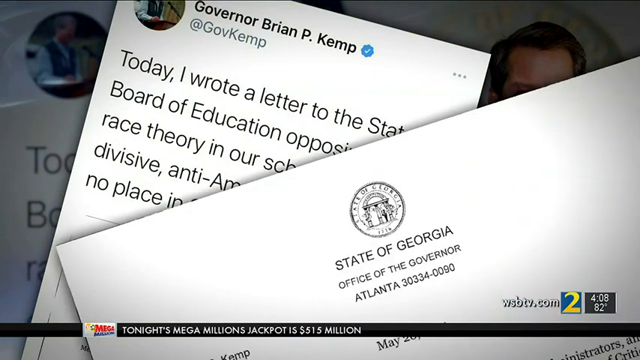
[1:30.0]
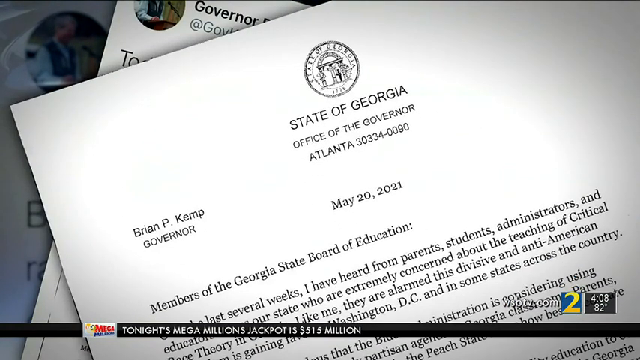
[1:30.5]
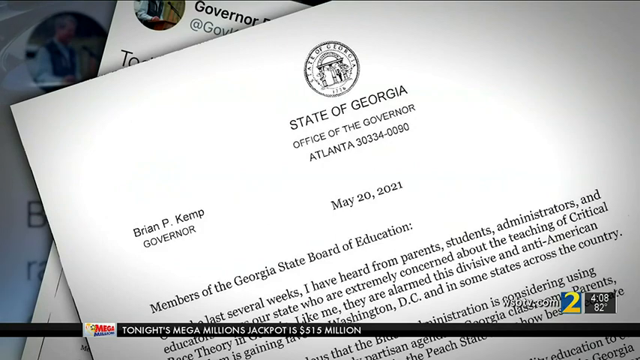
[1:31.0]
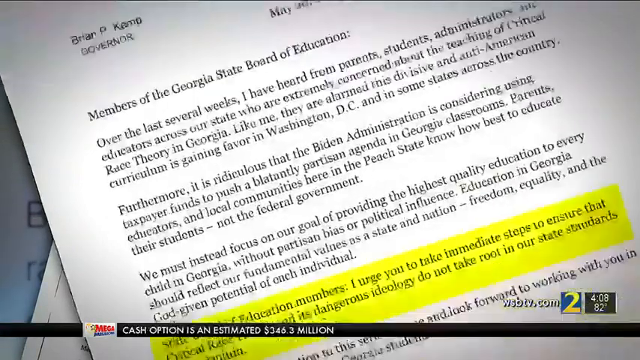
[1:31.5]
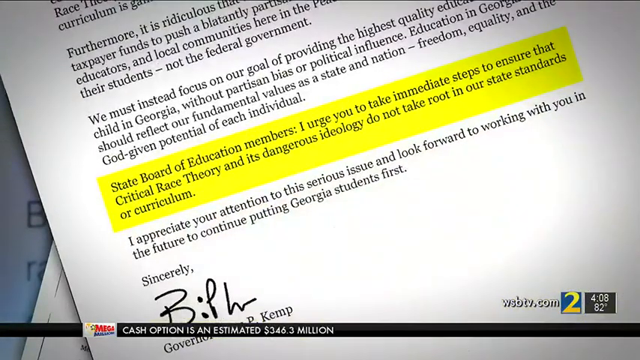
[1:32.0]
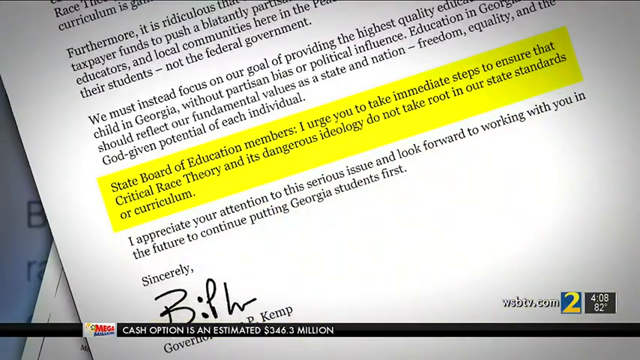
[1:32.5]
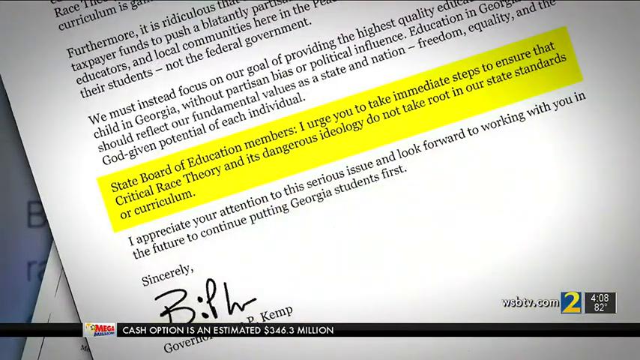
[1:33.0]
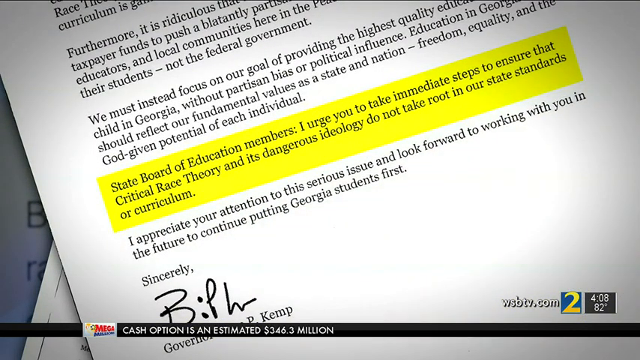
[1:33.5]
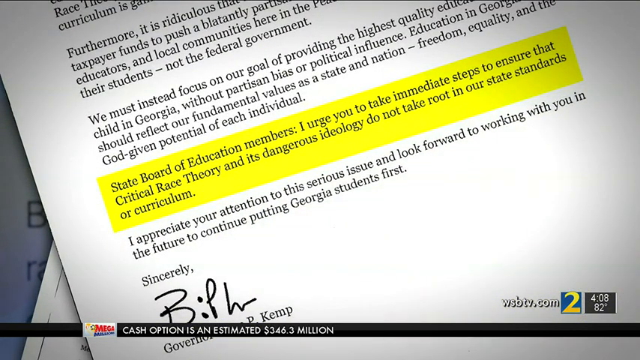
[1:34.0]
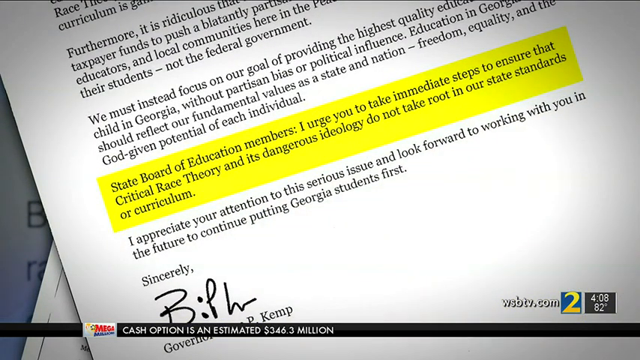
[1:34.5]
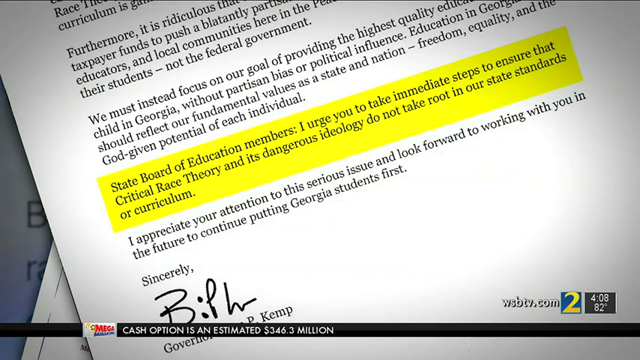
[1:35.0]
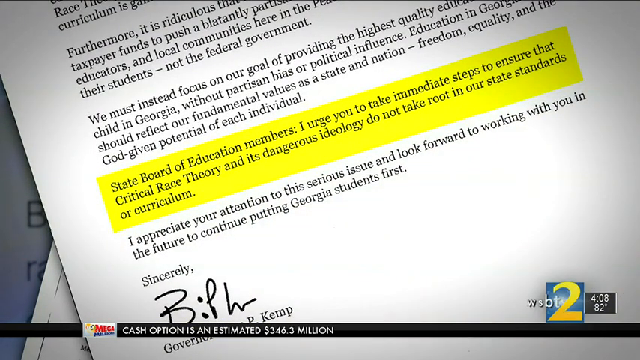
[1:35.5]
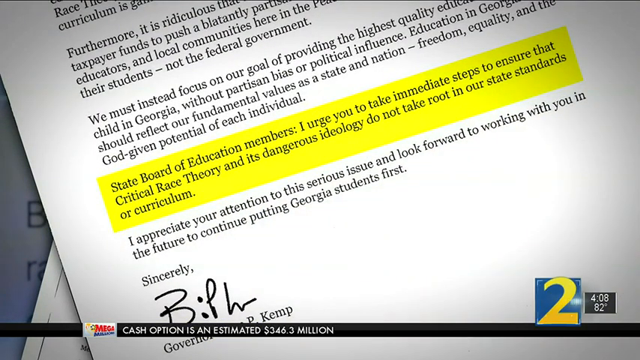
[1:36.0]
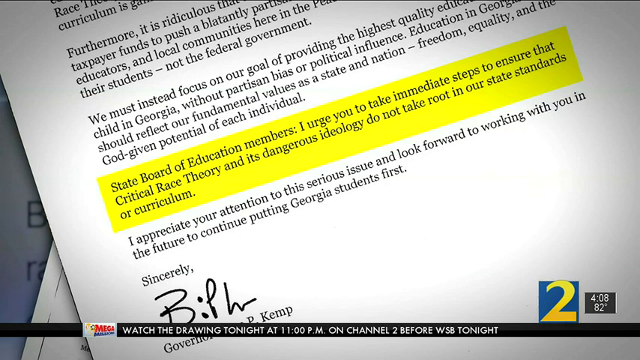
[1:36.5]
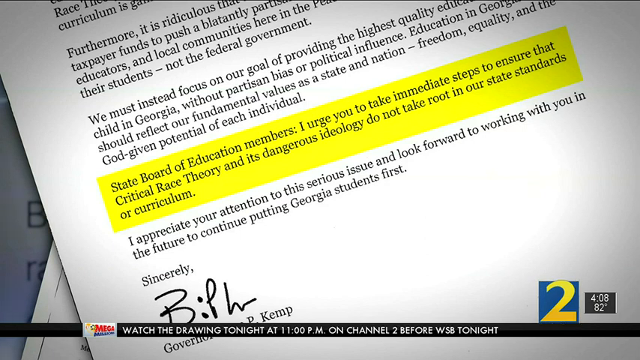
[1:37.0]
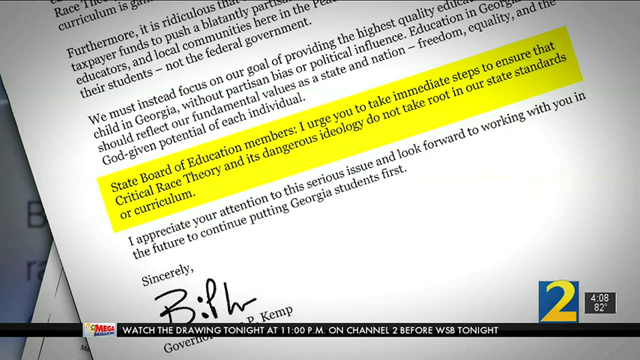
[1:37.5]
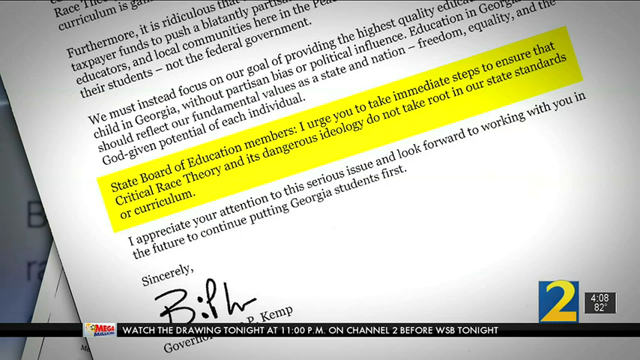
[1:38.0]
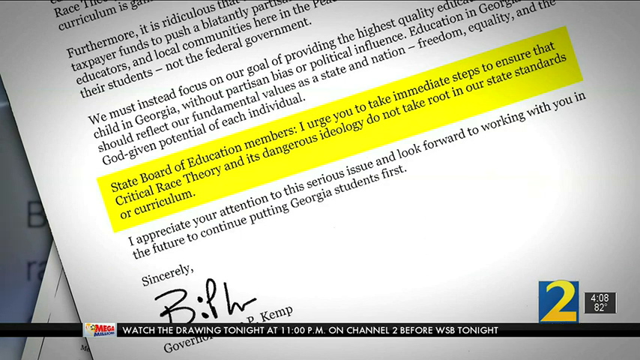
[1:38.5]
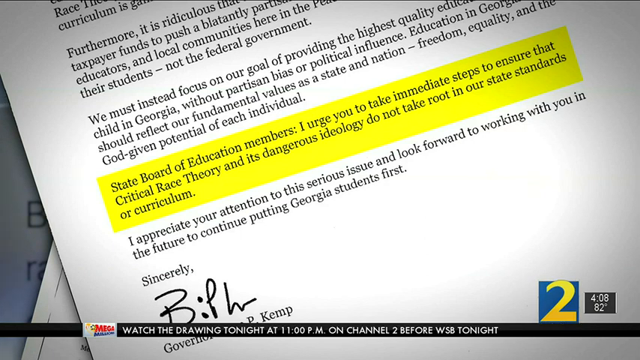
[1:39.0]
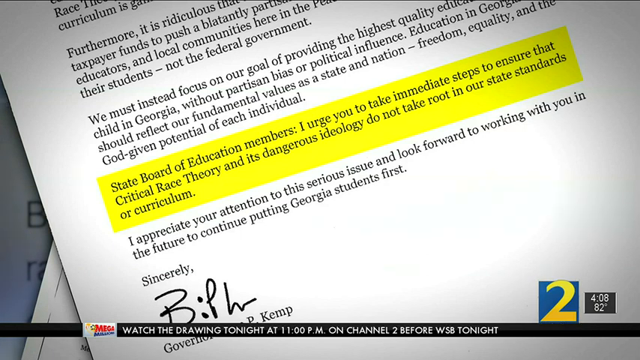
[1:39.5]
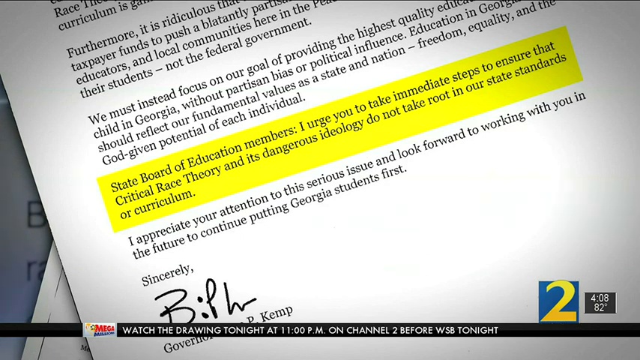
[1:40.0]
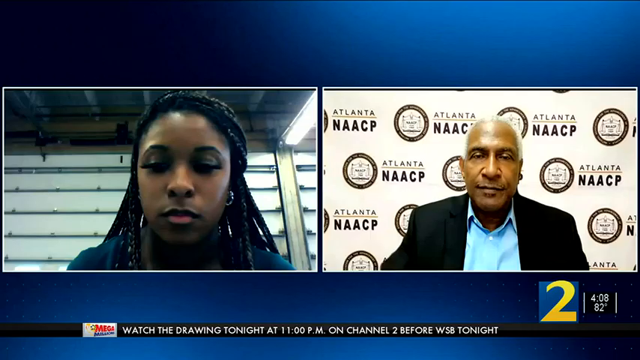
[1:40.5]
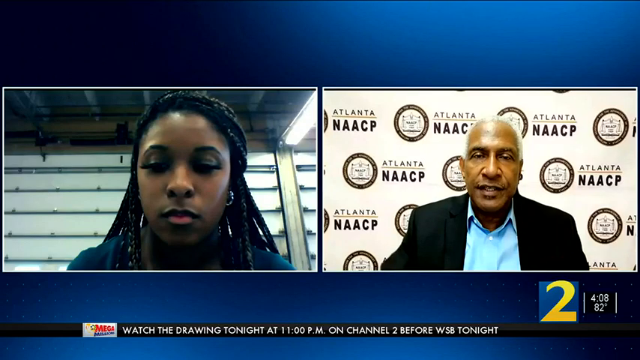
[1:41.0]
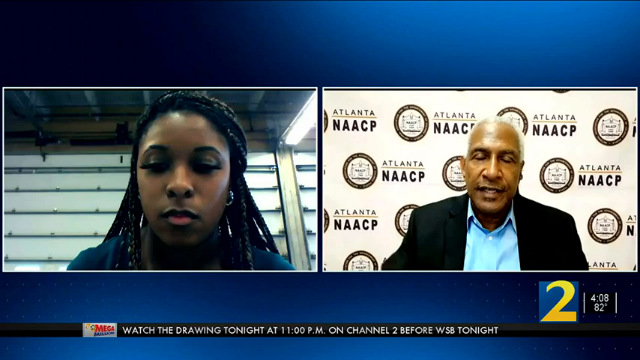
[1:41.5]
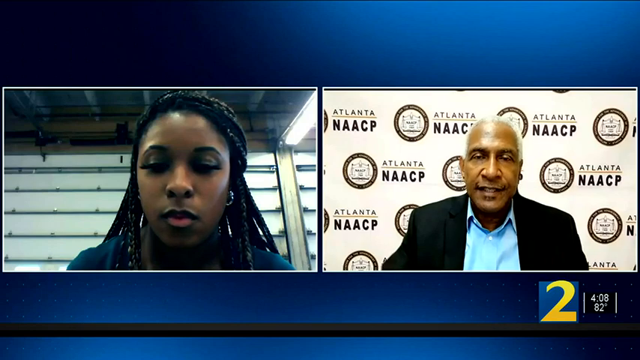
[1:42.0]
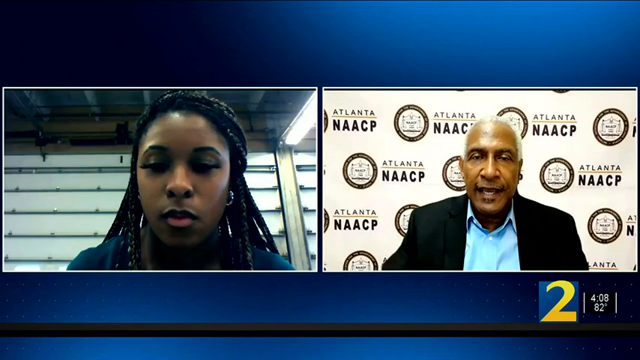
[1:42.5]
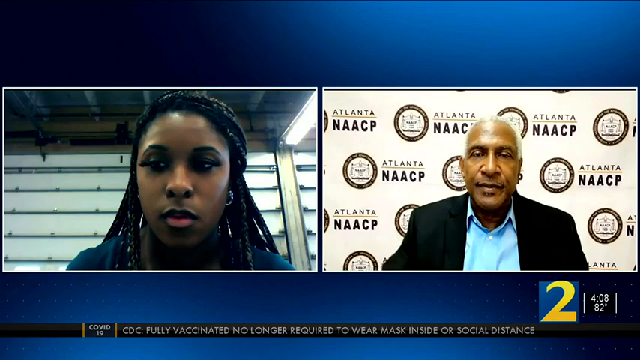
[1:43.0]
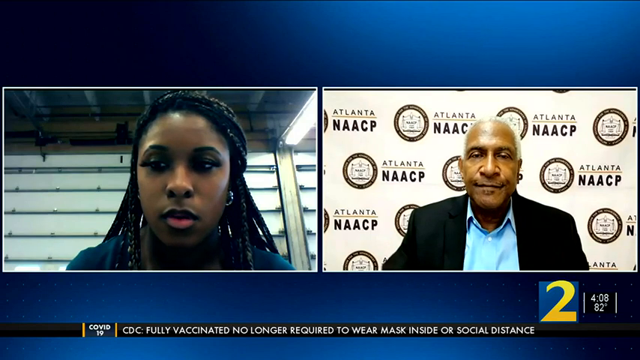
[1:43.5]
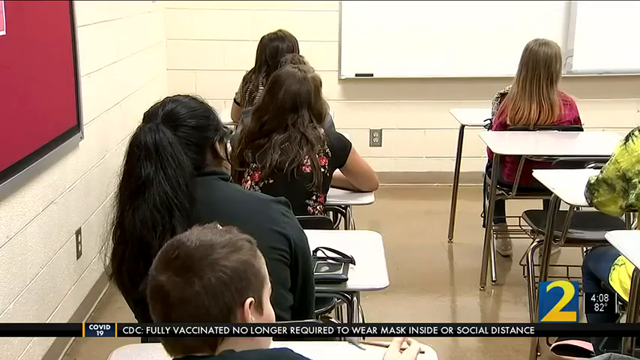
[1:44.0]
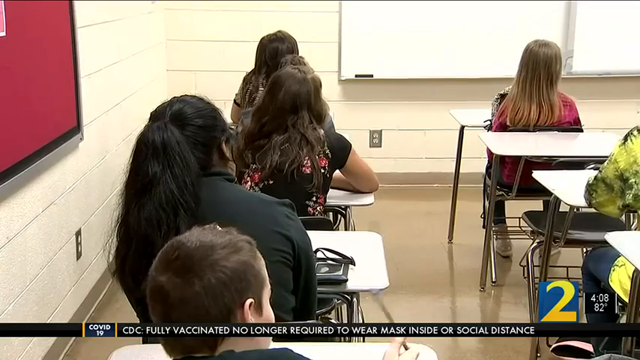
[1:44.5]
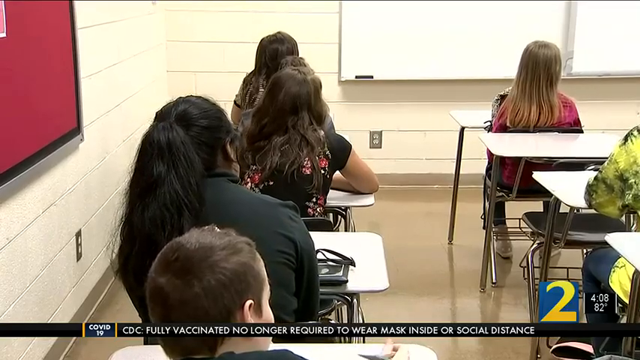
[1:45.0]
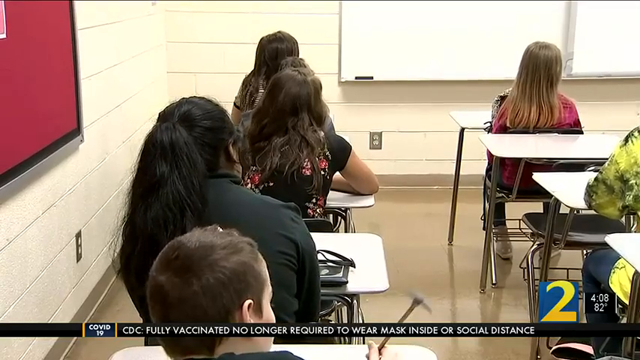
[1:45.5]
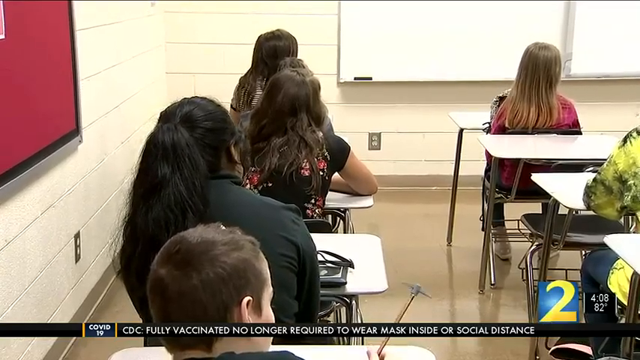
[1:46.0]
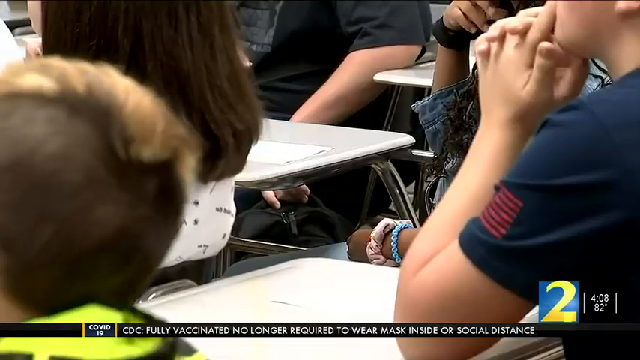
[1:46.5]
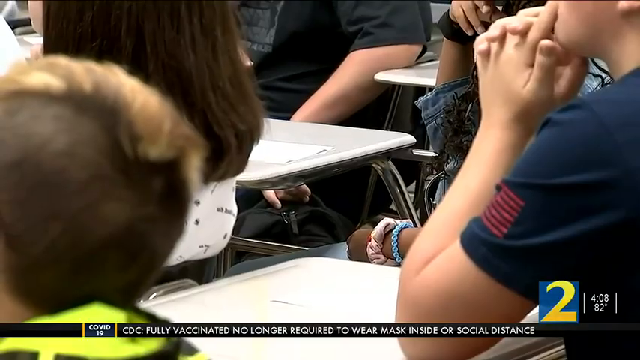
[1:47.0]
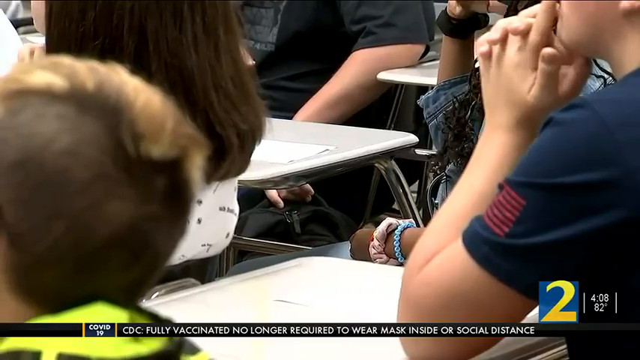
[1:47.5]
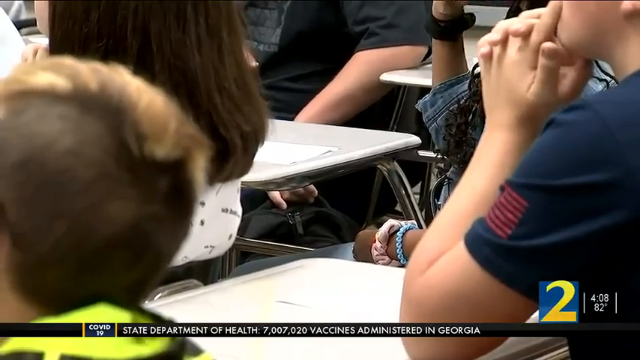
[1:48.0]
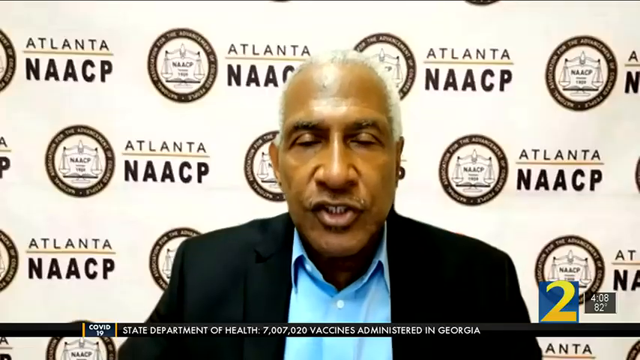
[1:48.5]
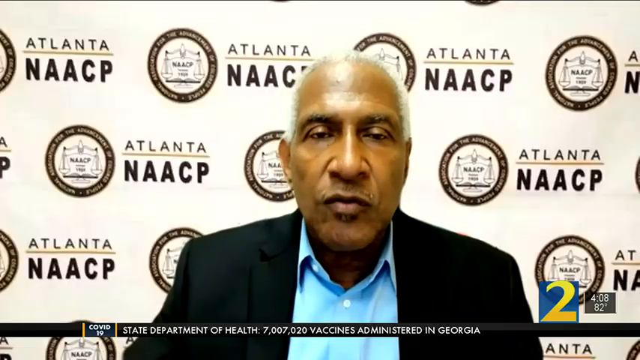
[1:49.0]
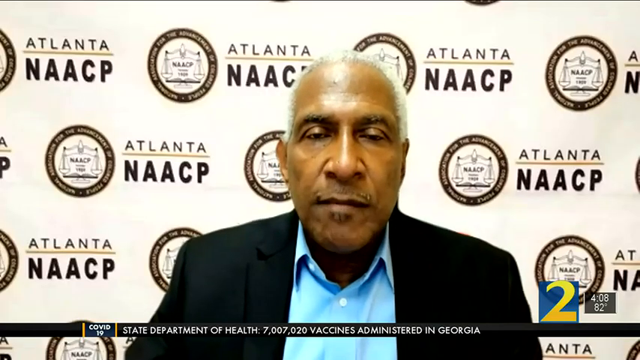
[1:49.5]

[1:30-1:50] A tweet reads "Governor Brian P. Kemp wrote a letter to the State Board of Education opposing critical race theory in our schools," and text says "divisive anti-American agenda has no place in Georgia classrooms." A picture of Governor Kemp is on the right, followed by the letter itself. A part of the letter is highlighted in yellow, reading "the State Board of Education members are taking immediate steps to ensure that critical race theory" and continuing. The letter is signed by him. Next comes what looks like an interview with someone from the Atlanta NAACP; his name pops up as Richard Rose, president of the Atlanta branch of the NAACP, and he talks, giving a press conference or interview to the news station.